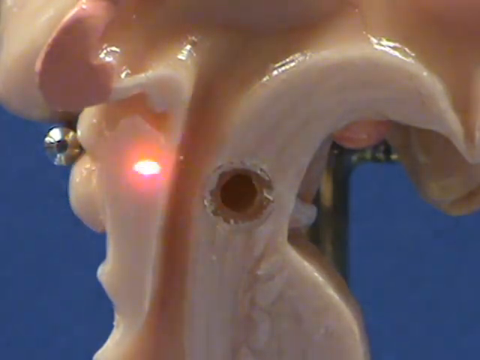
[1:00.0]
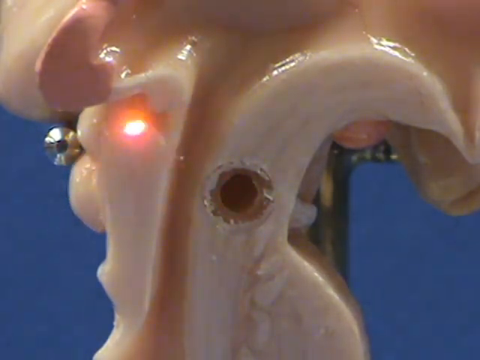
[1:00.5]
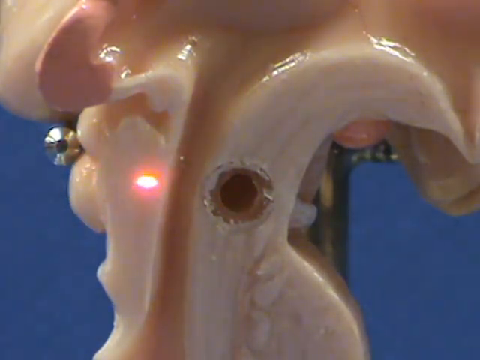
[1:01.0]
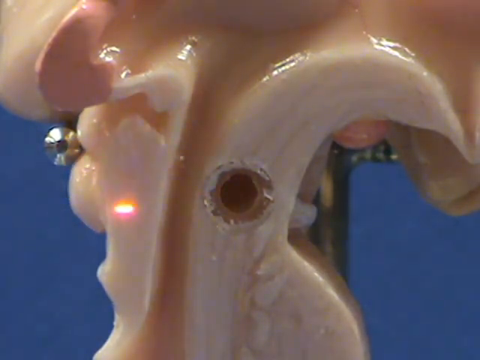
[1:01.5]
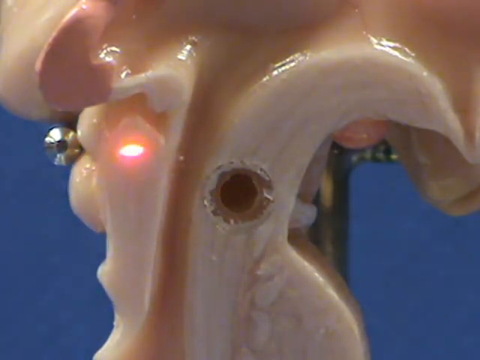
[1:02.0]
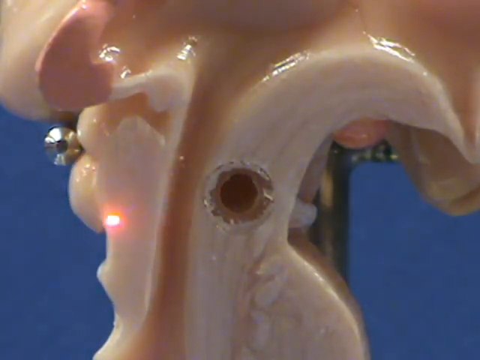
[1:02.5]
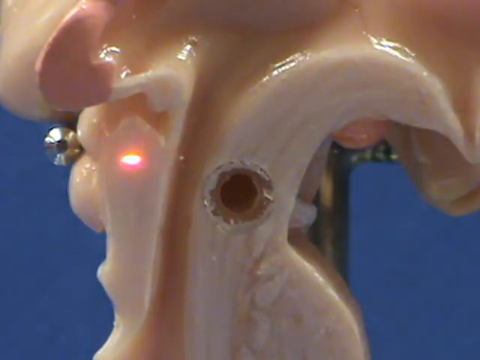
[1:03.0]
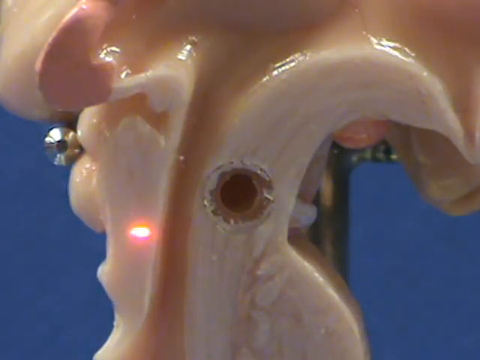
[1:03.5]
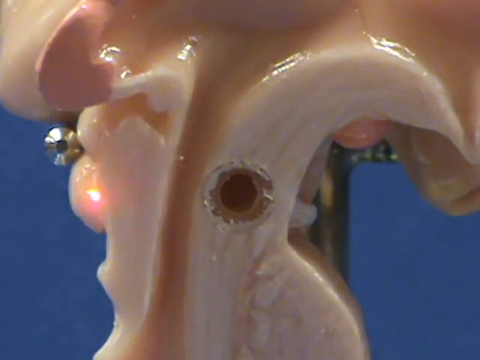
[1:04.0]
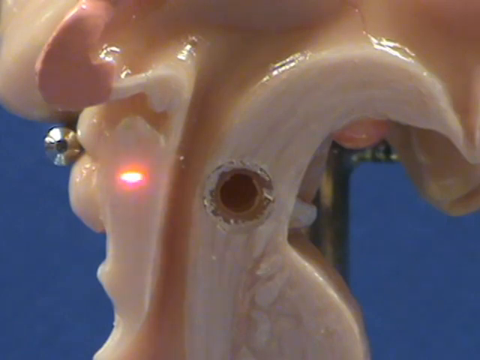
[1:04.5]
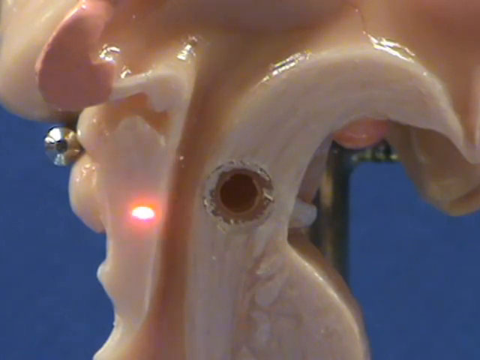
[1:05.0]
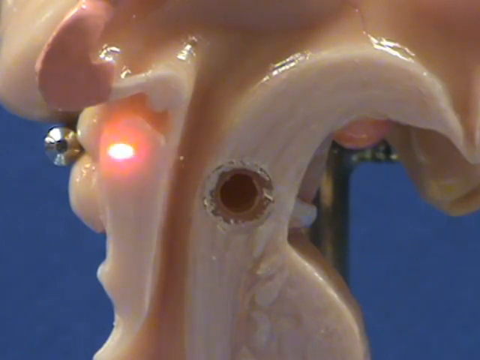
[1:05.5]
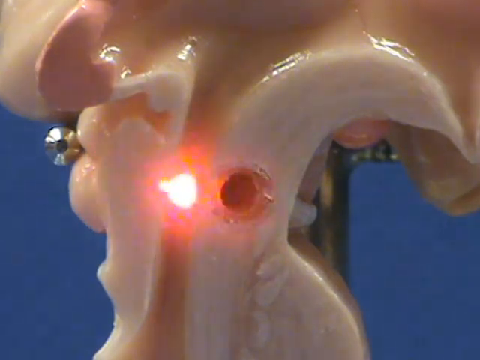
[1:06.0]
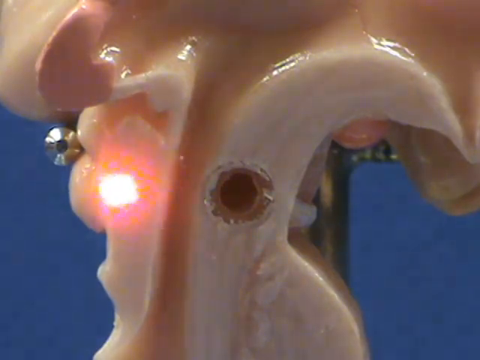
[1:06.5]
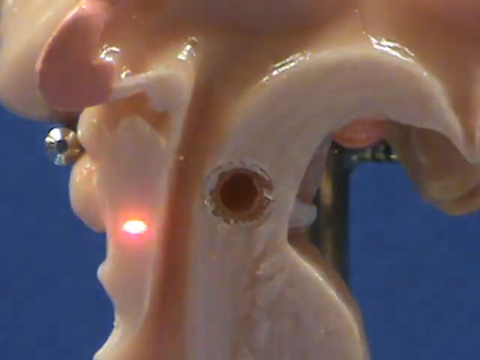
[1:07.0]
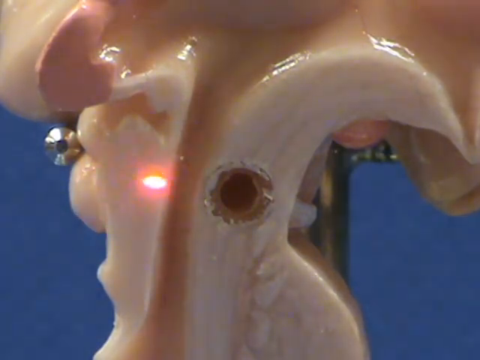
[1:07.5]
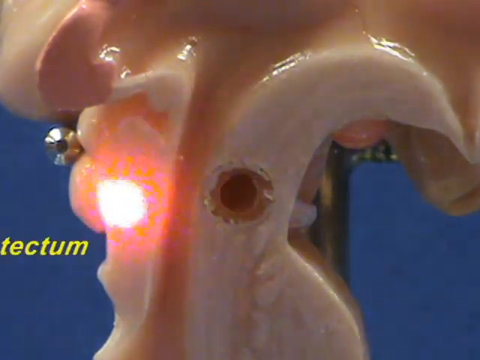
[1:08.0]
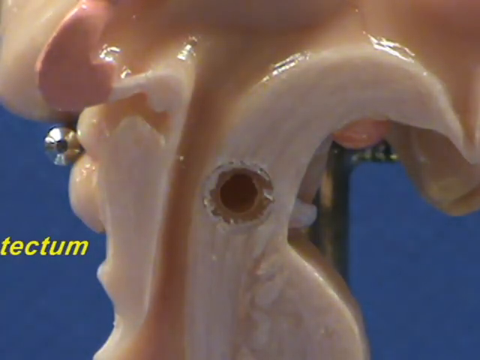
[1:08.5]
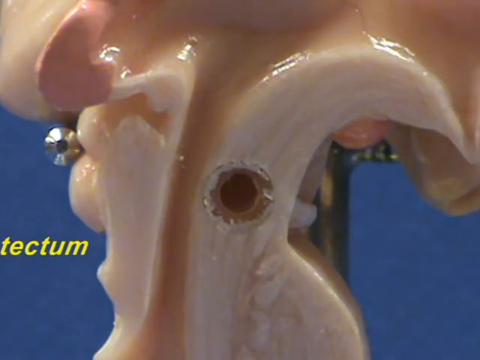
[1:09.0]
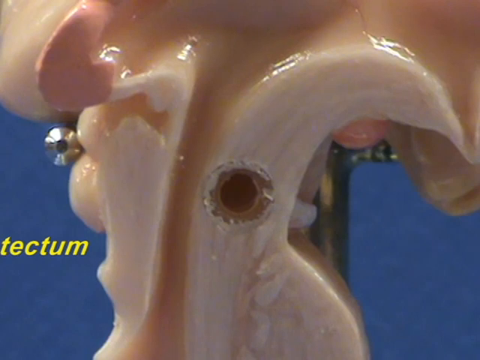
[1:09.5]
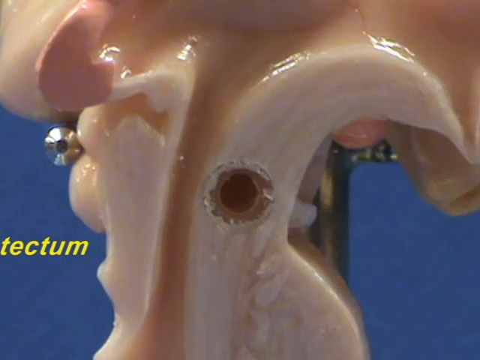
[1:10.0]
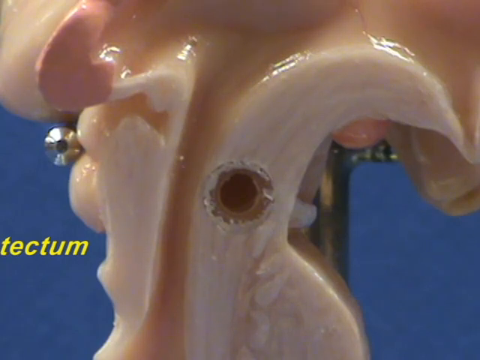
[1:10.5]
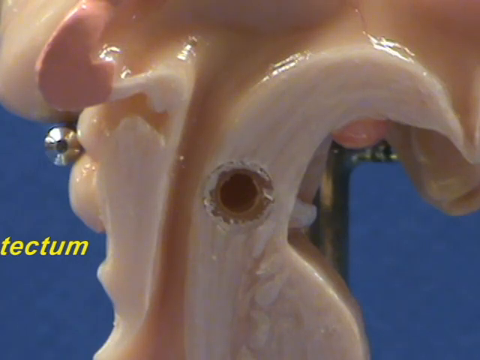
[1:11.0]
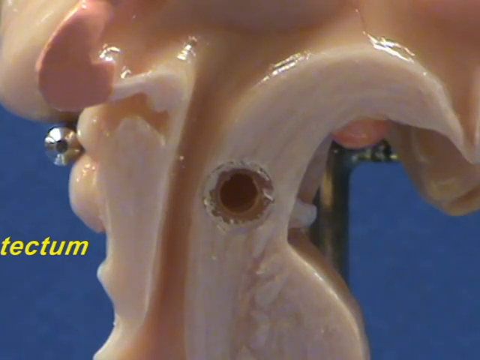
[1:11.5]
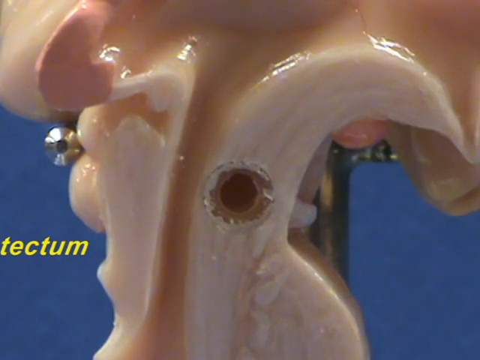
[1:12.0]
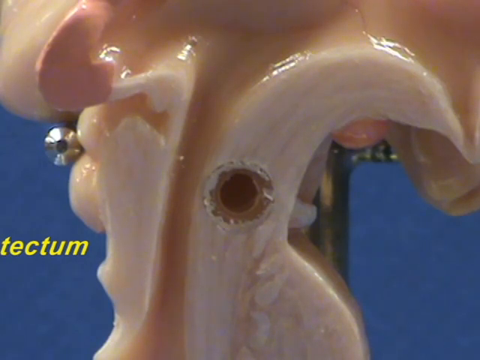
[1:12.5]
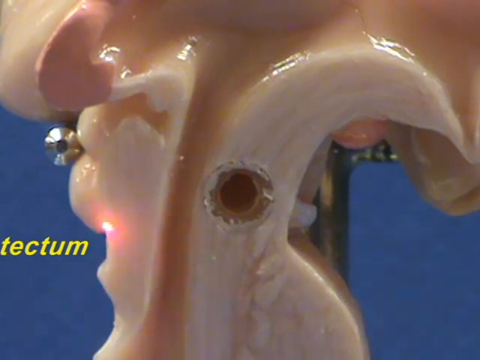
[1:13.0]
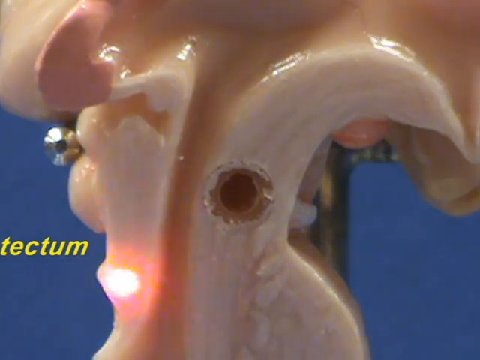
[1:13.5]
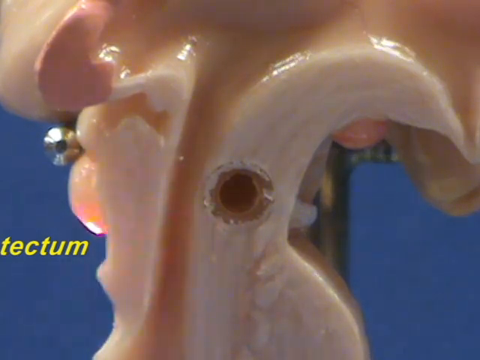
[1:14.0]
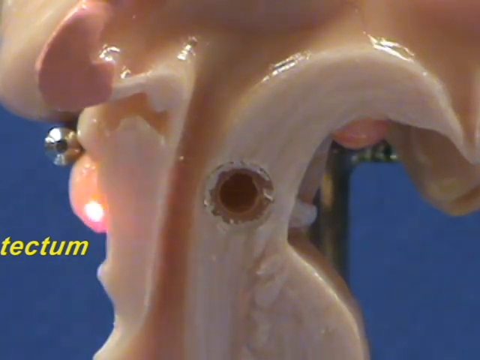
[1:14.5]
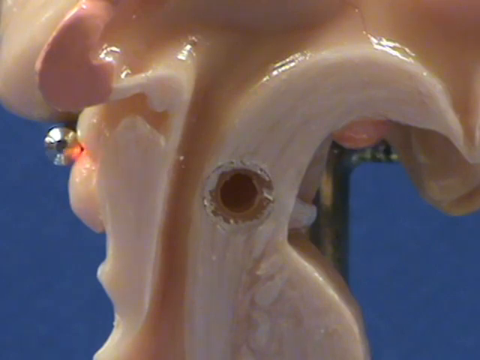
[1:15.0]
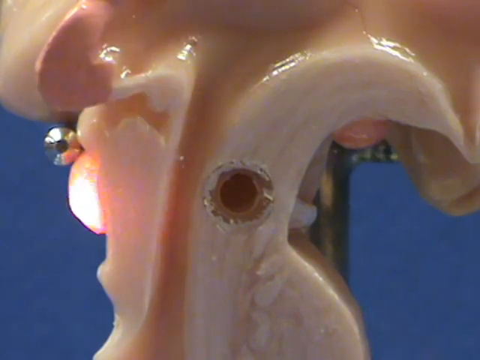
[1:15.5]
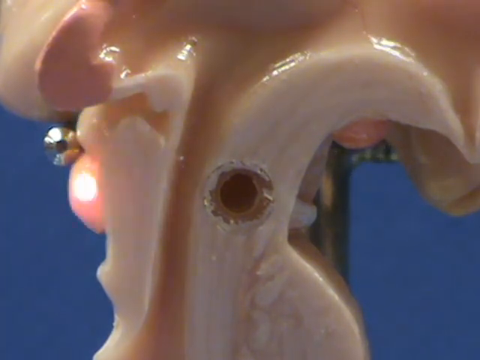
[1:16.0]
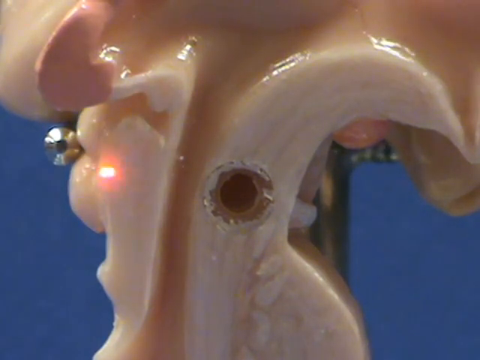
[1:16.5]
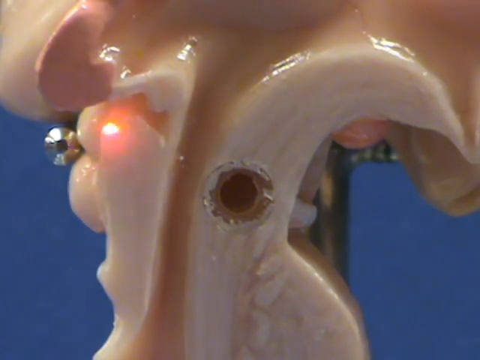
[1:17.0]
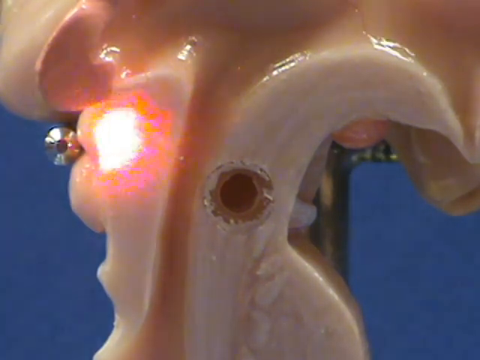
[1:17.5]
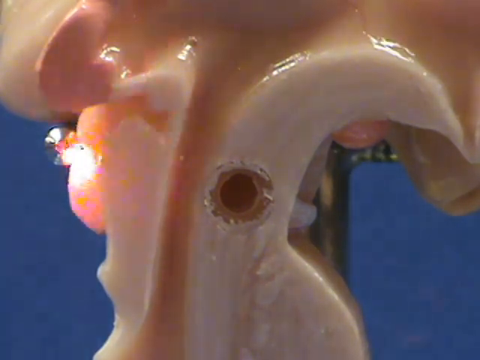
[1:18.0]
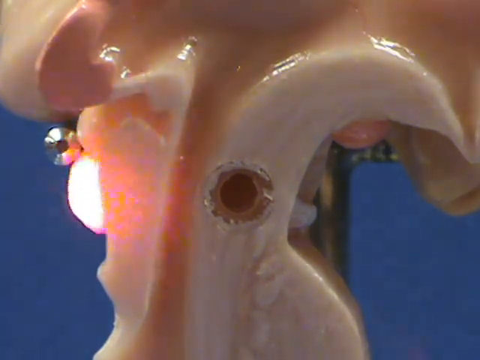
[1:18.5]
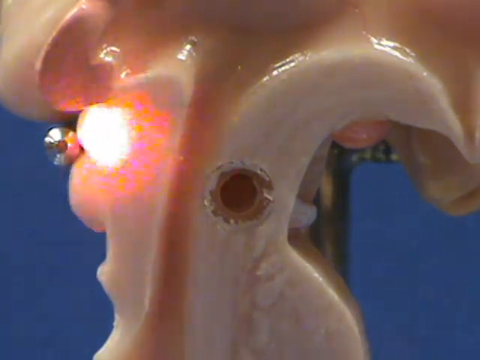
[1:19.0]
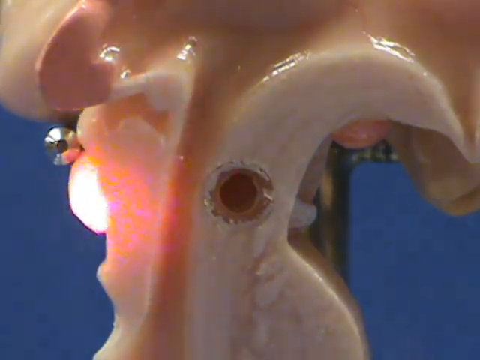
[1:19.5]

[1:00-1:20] Against the dark blue background, the camera is zoomed in on the object representing a part of the human body. It is smaller and looks like it is made of a plastic-type material, and it is painted. A light is used, and yellow text labels parts of the object; one label pops up reading "tectum". The light highlights parts of it, and a screw that is not part of the model is visible holding it up. The view is very close in. The object is shiny, with variation in color: some areas are a darker fleshy pink and some a whiter pink, with possibly a little veining. The light is not red; it is more like a highly concentrated flashlight beam than an actual laser.